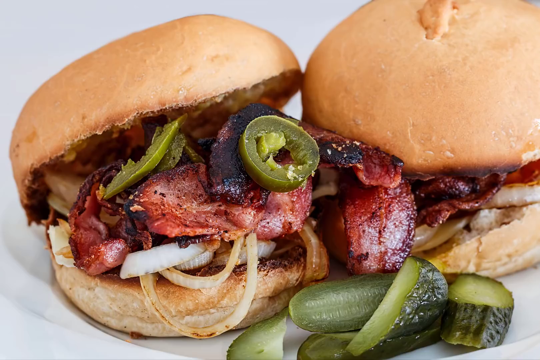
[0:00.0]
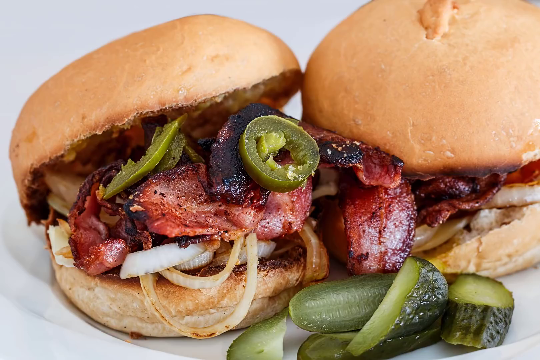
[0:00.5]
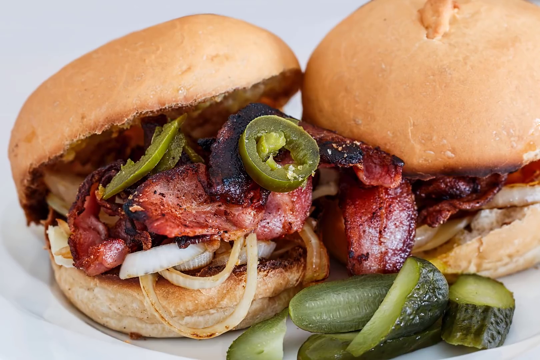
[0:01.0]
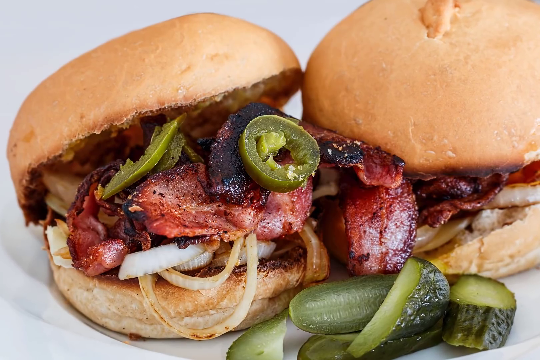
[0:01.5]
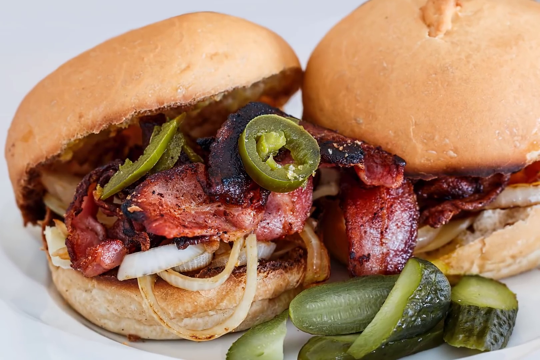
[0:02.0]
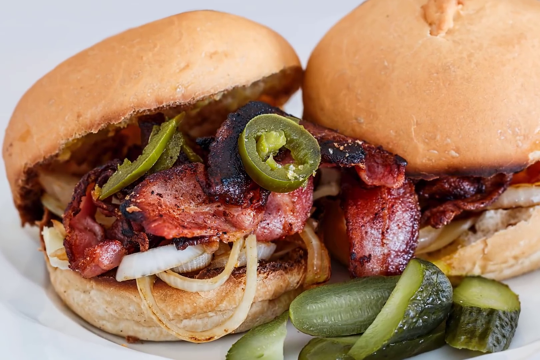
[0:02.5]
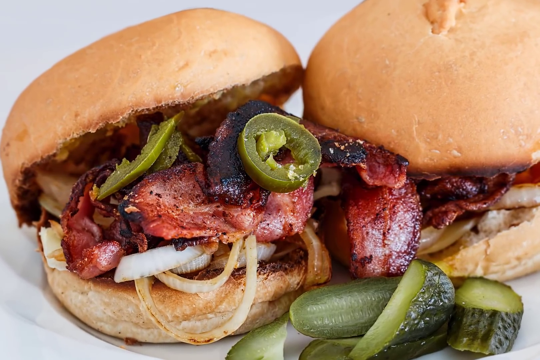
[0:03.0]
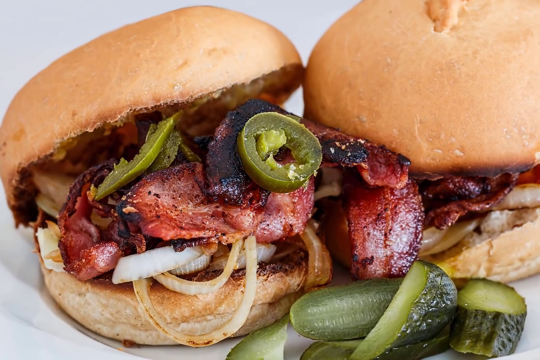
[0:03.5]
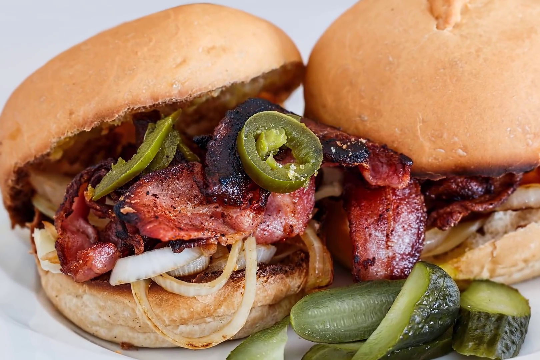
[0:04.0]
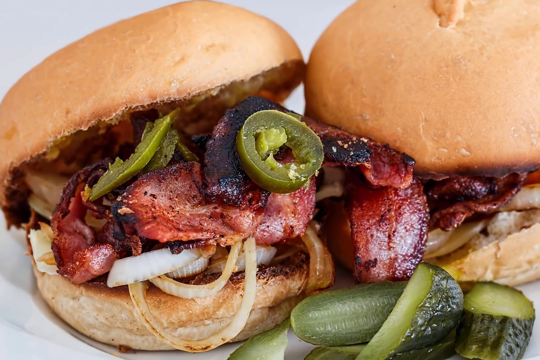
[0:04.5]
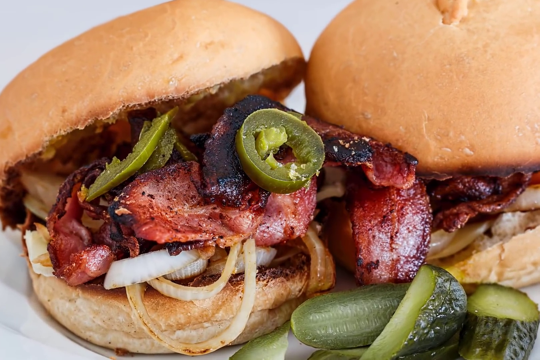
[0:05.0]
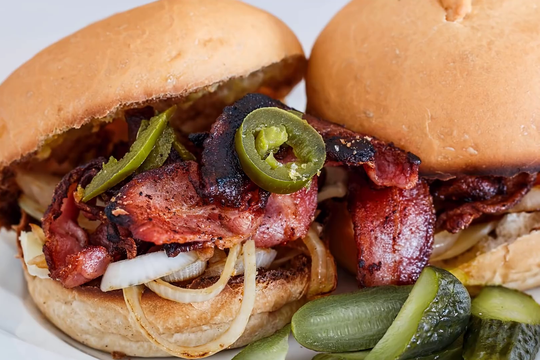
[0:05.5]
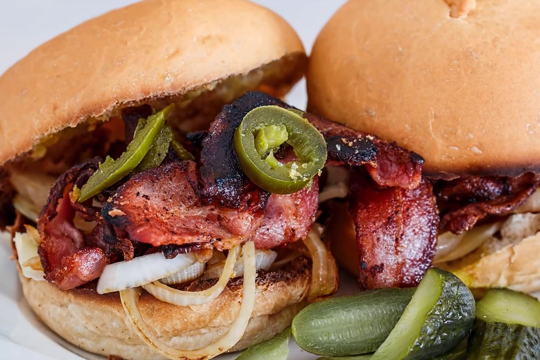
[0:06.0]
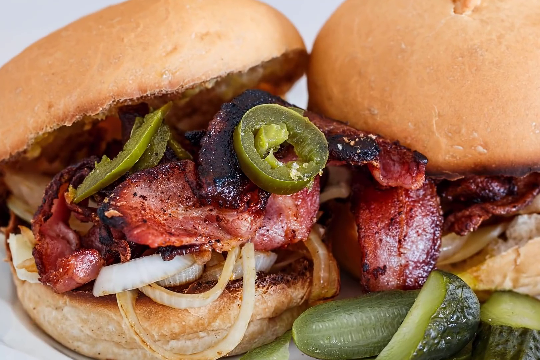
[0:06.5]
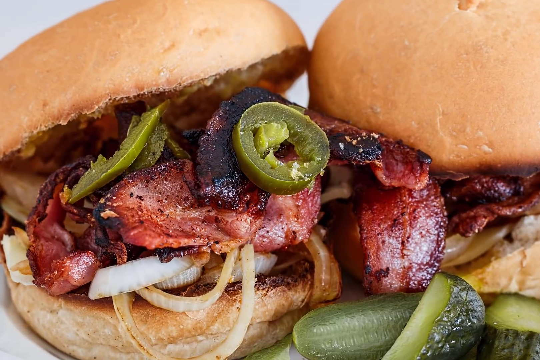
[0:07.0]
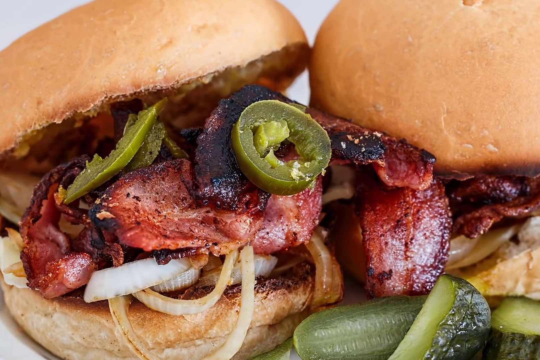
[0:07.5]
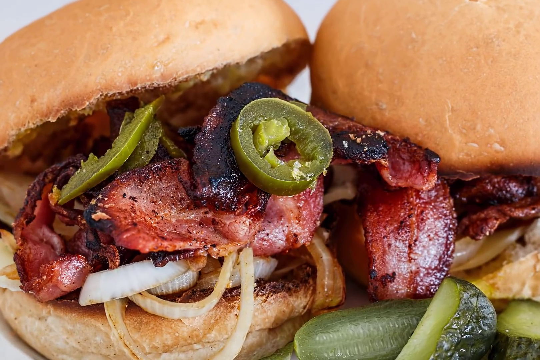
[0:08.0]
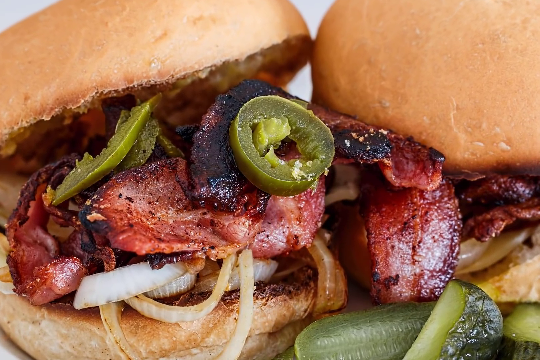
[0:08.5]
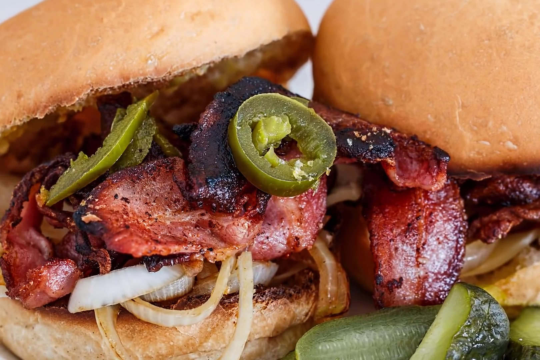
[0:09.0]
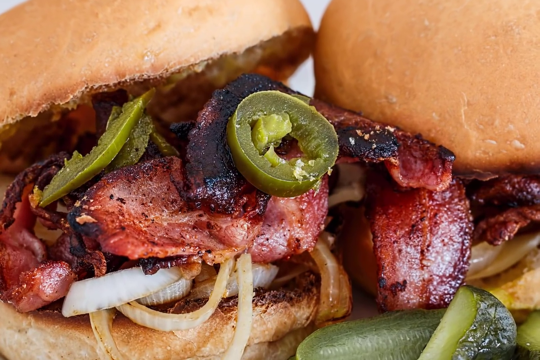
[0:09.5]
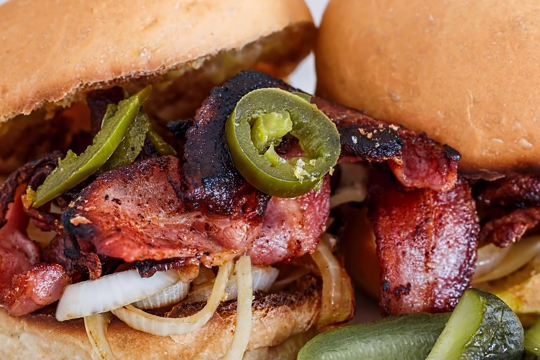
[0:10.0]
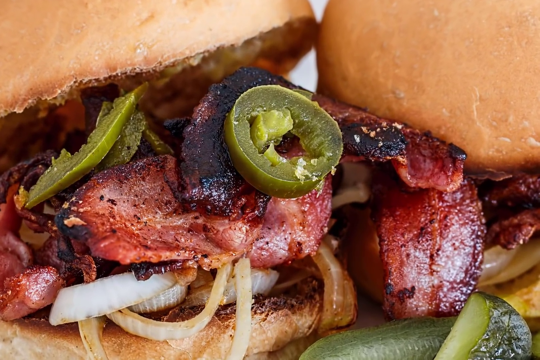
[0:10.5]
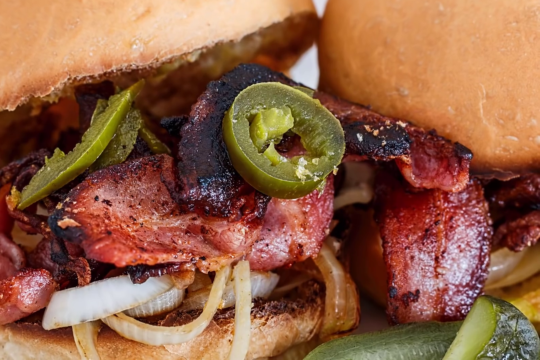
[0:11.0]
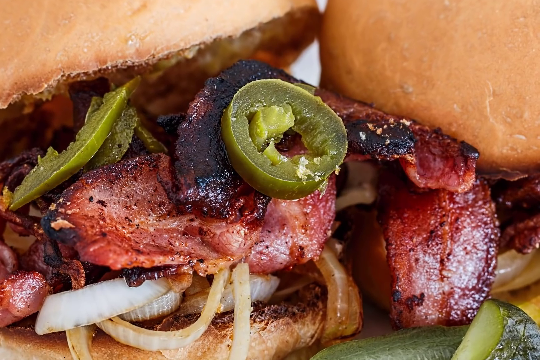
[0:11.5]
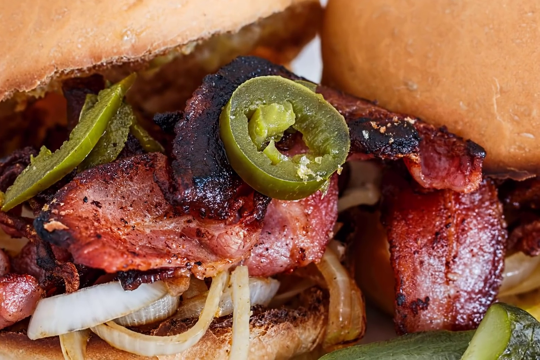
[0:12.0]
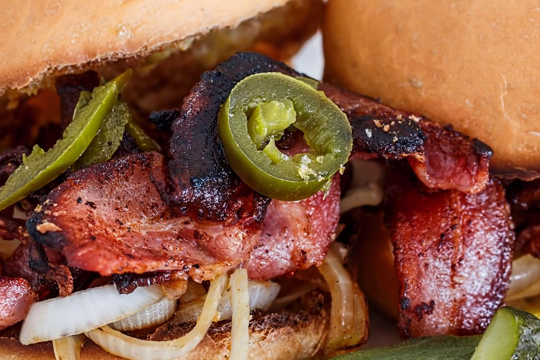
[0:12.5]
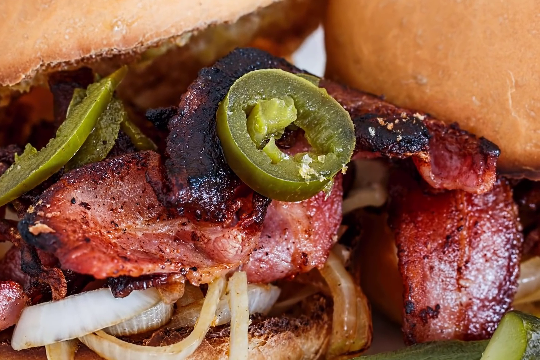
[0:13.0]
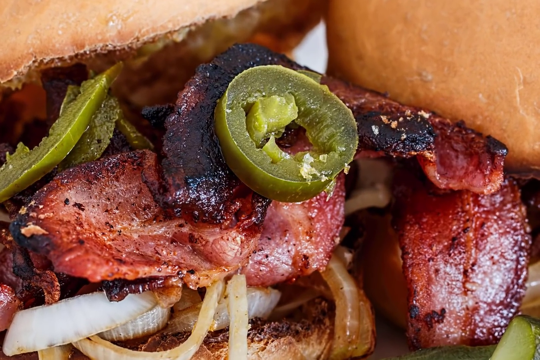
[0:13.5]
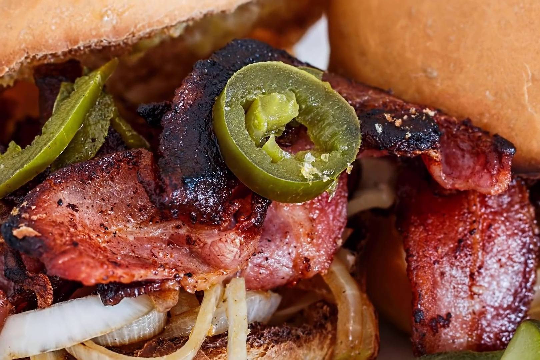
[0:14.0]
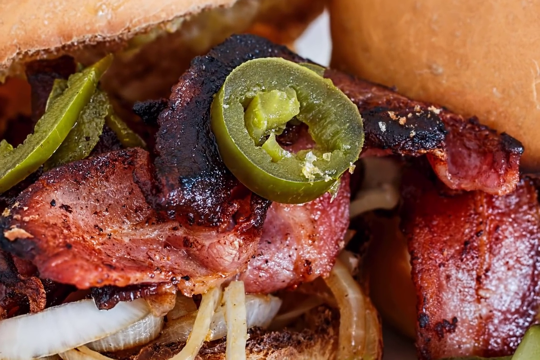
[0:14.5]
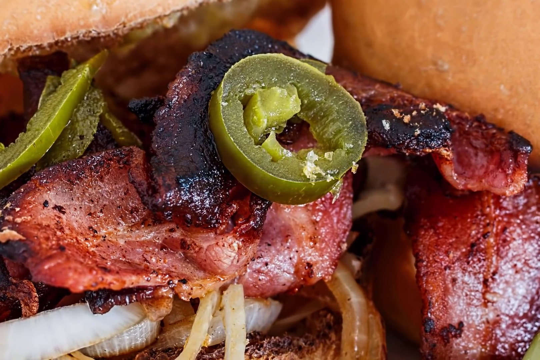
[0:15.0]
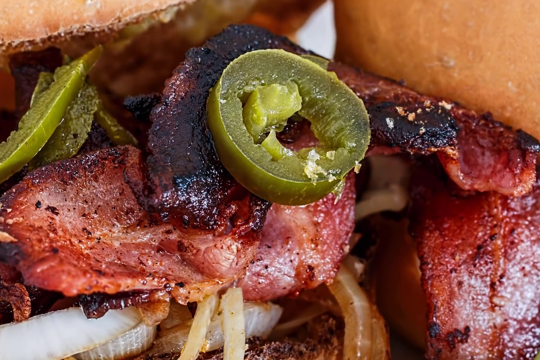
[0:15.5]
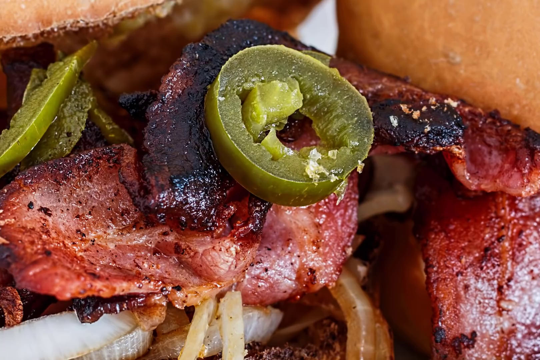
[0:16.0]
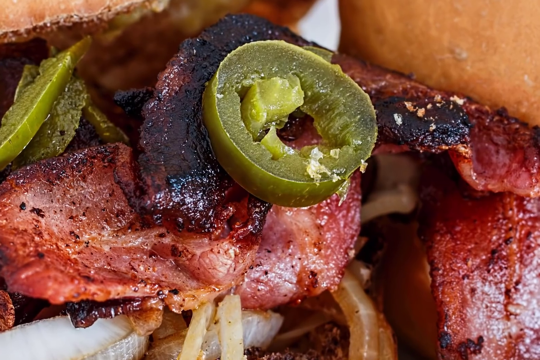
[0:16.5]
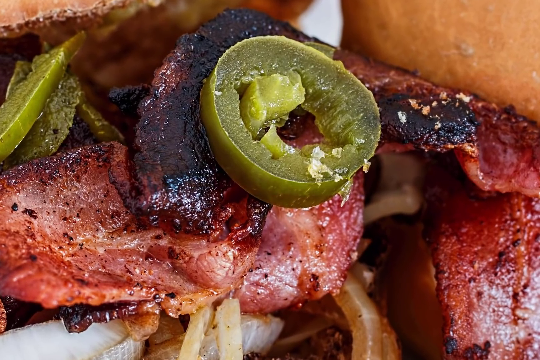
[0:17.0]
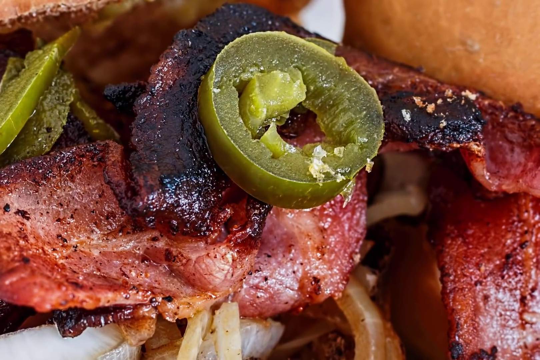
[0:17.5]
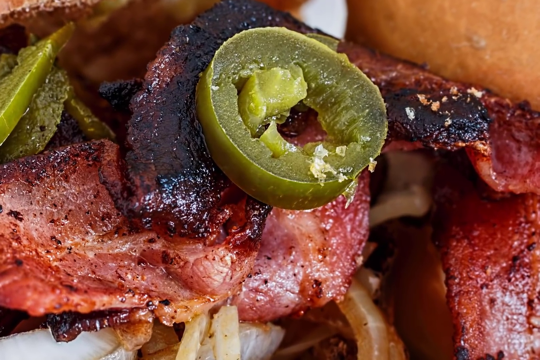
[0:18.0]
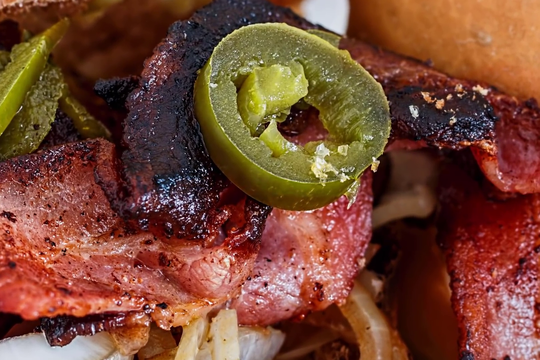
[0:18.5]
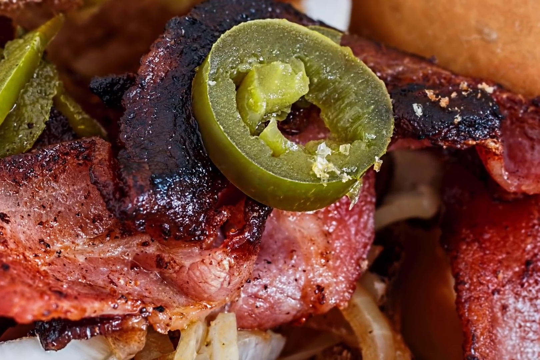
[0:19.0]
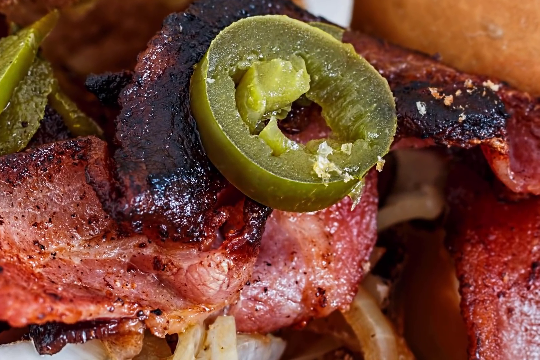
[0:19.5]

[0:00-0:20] A bagel that looks juicy is shown, with fillings of jalapeno, onion rings and bacon inside. There is also a burger with bacon and jalapeno.